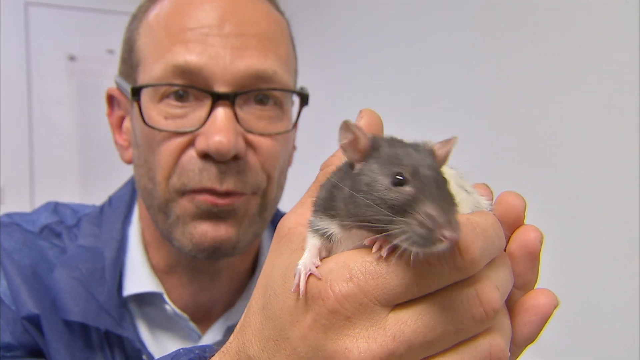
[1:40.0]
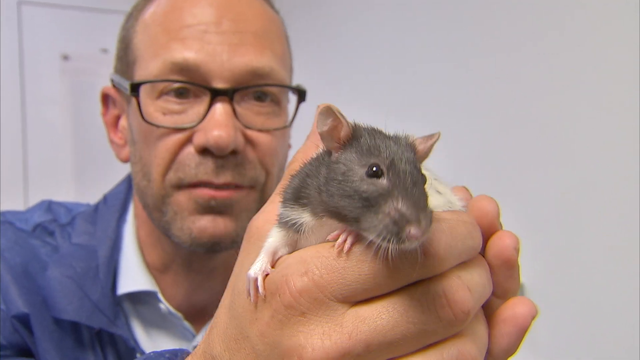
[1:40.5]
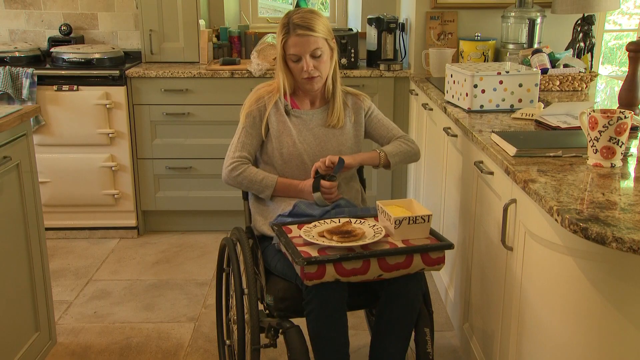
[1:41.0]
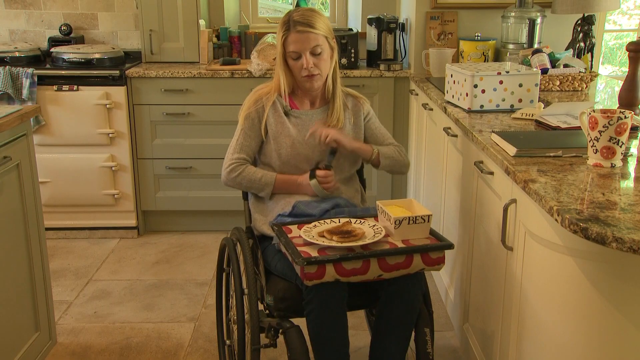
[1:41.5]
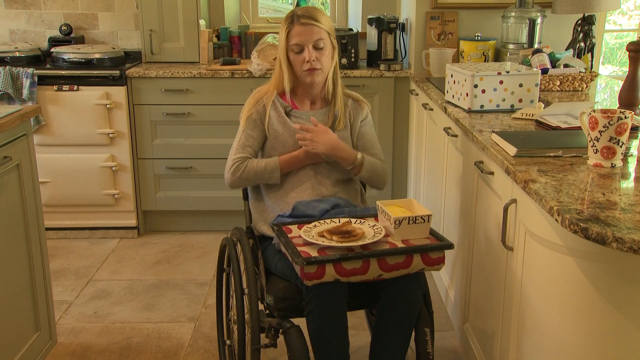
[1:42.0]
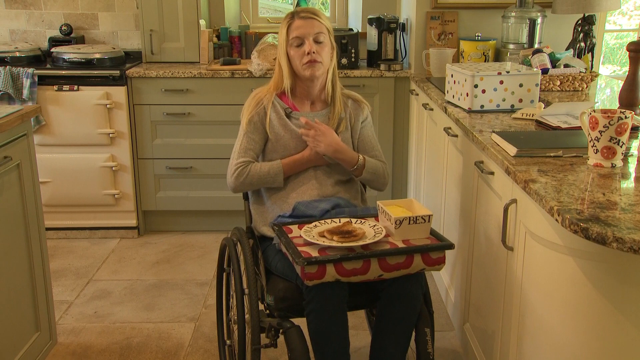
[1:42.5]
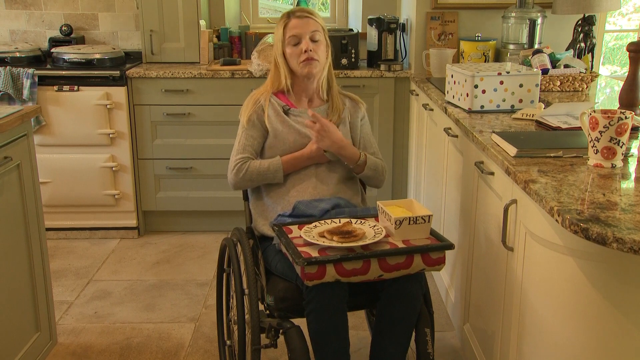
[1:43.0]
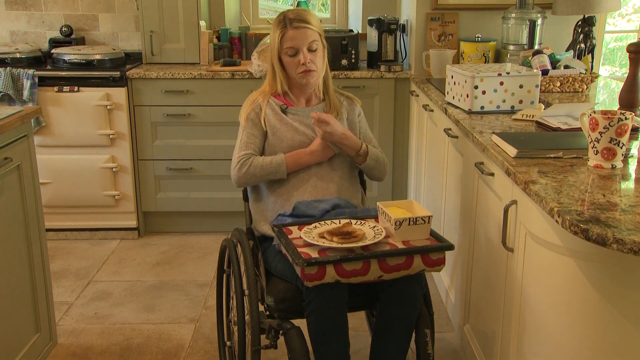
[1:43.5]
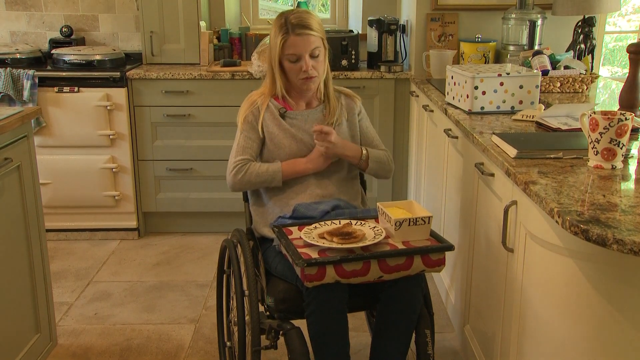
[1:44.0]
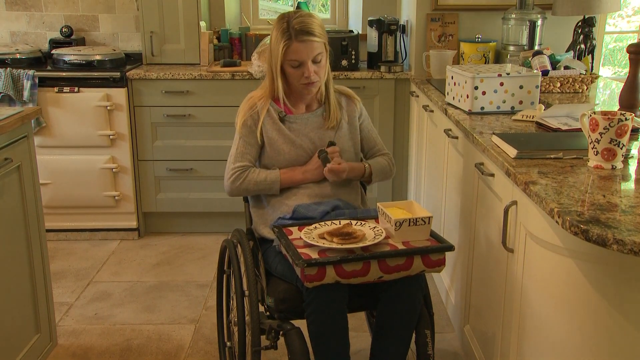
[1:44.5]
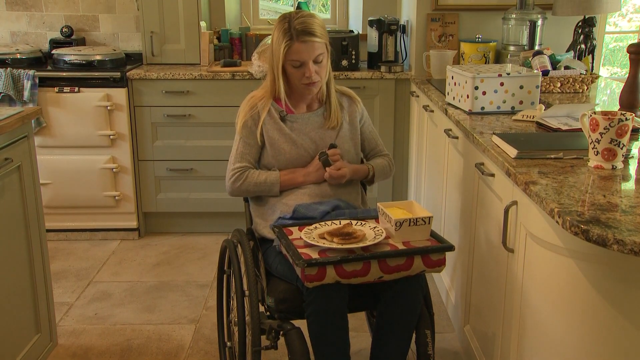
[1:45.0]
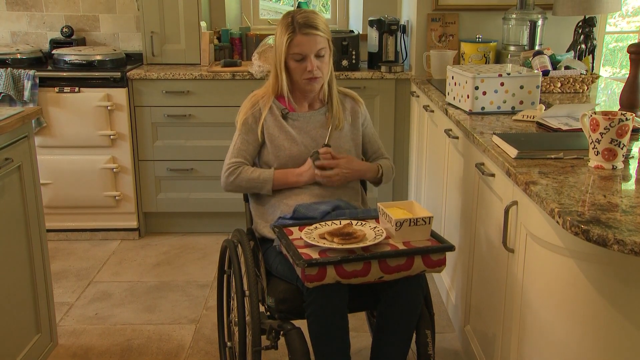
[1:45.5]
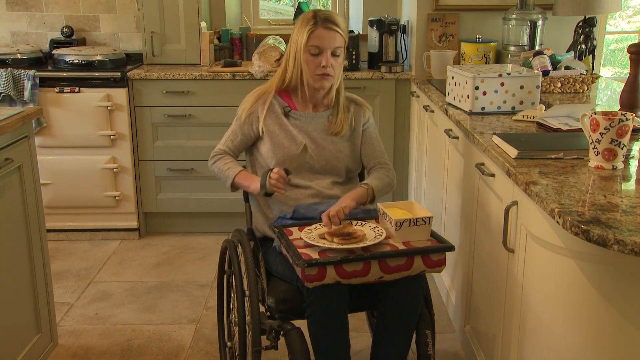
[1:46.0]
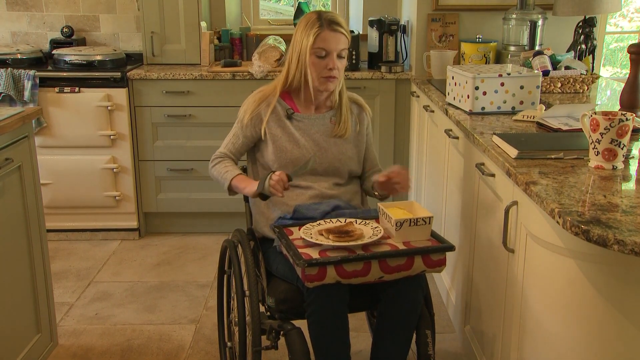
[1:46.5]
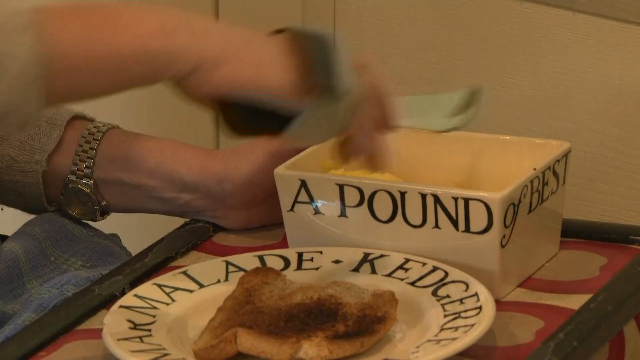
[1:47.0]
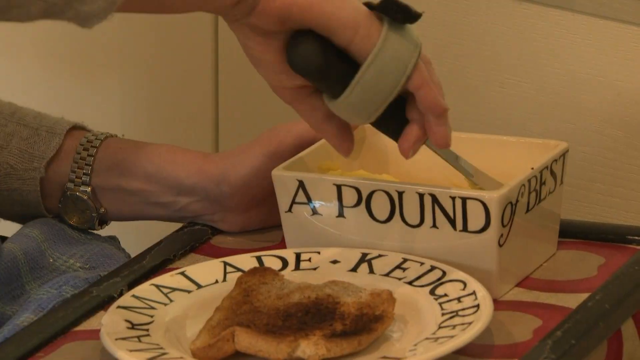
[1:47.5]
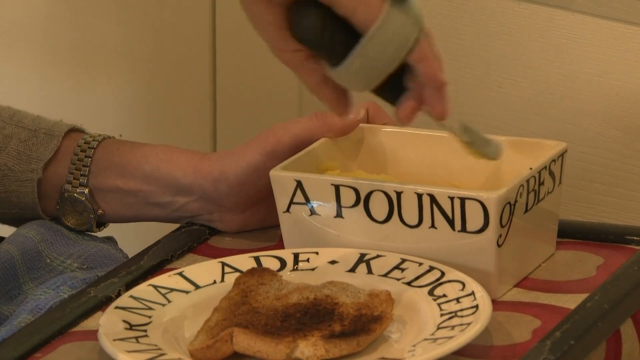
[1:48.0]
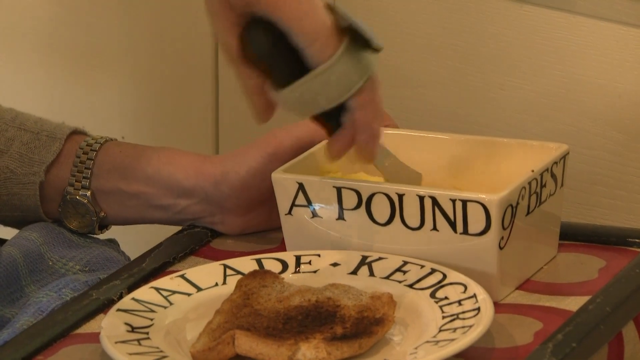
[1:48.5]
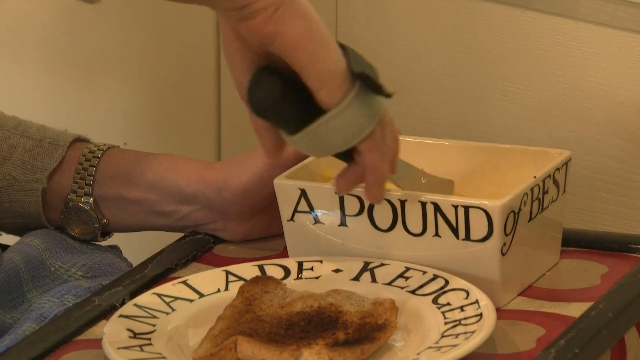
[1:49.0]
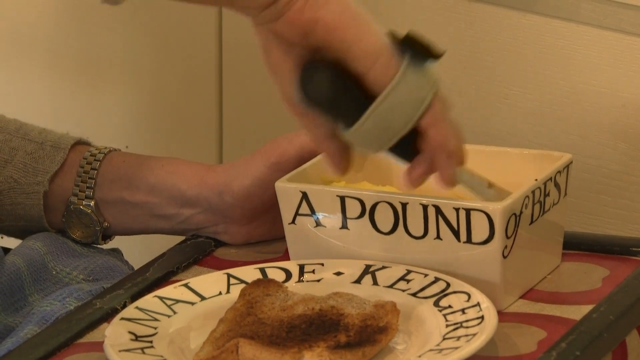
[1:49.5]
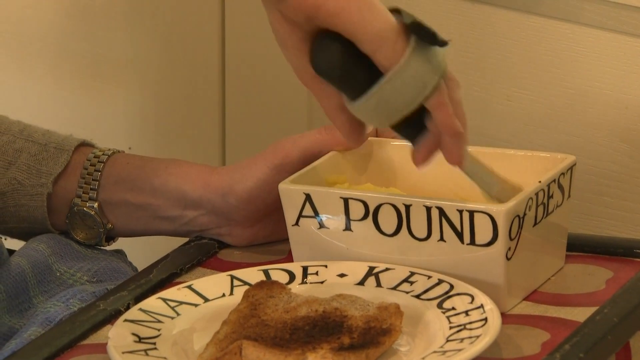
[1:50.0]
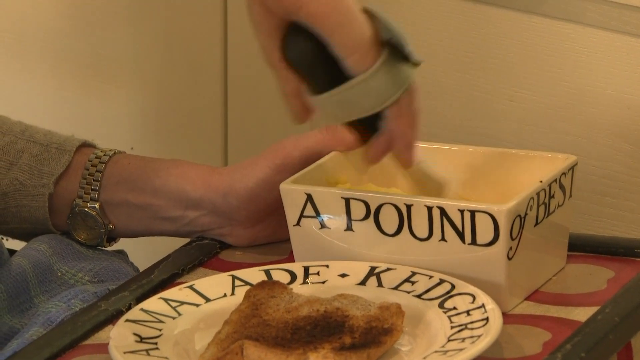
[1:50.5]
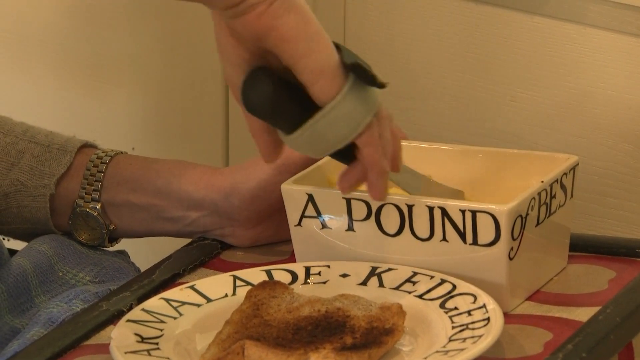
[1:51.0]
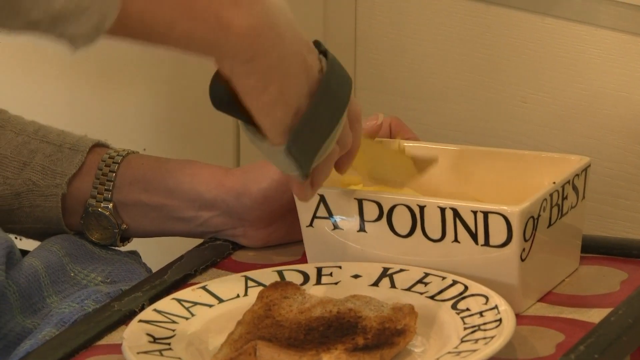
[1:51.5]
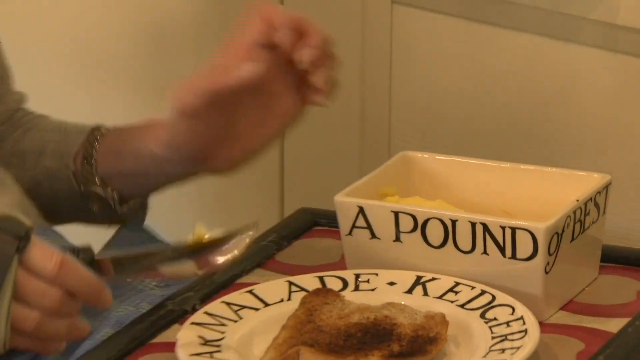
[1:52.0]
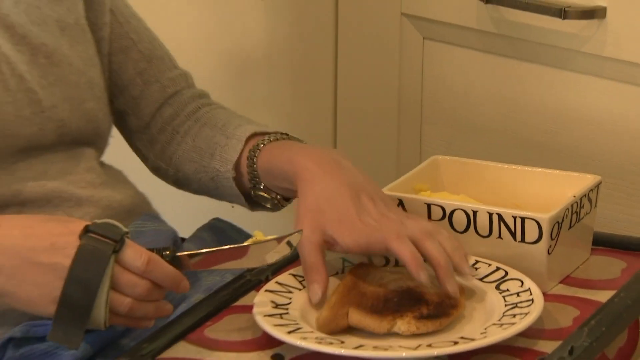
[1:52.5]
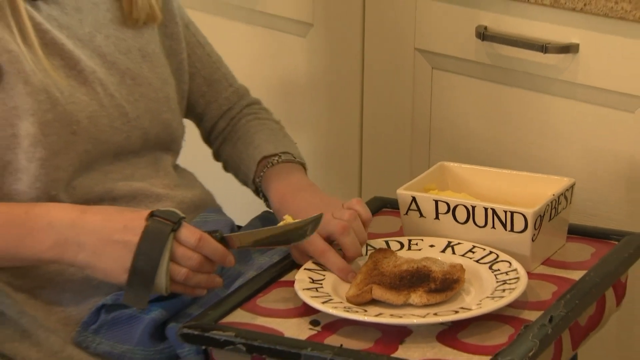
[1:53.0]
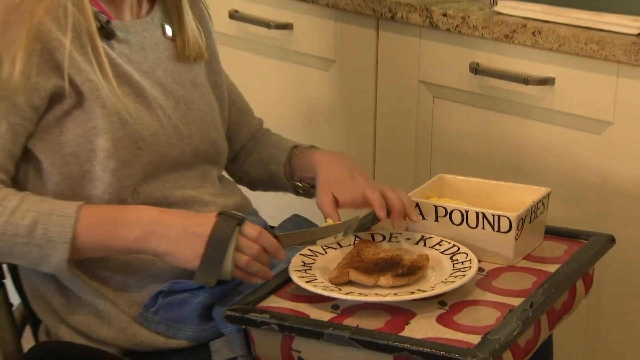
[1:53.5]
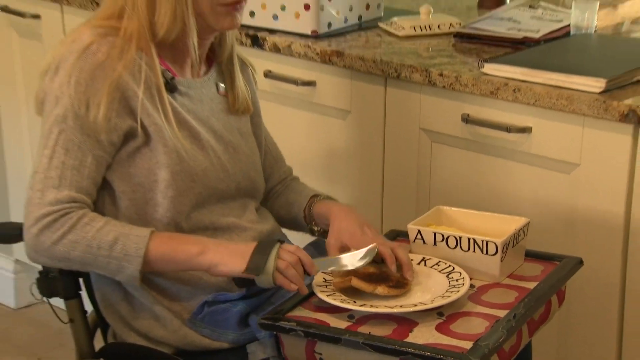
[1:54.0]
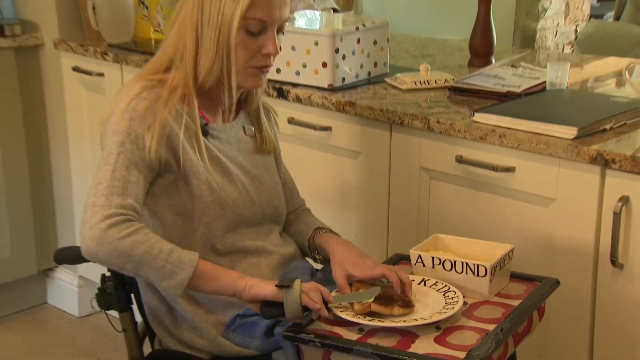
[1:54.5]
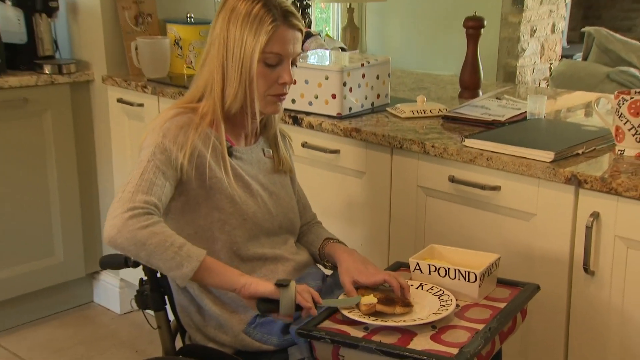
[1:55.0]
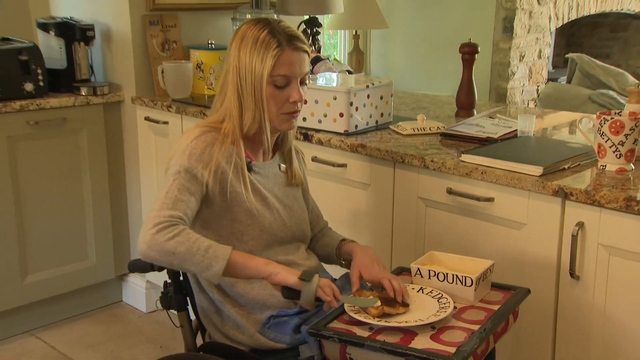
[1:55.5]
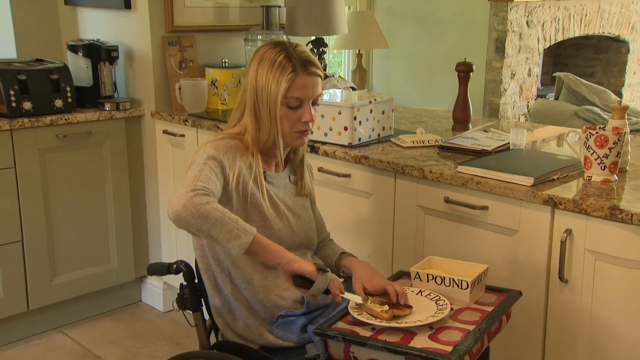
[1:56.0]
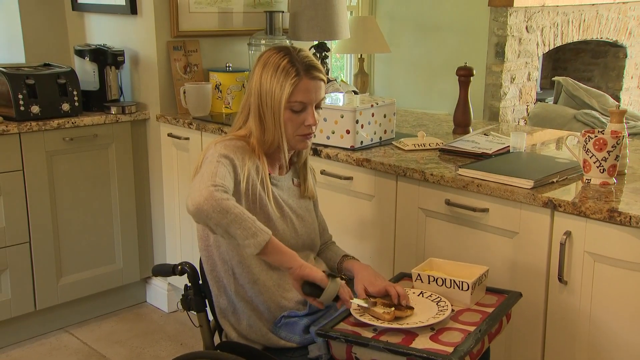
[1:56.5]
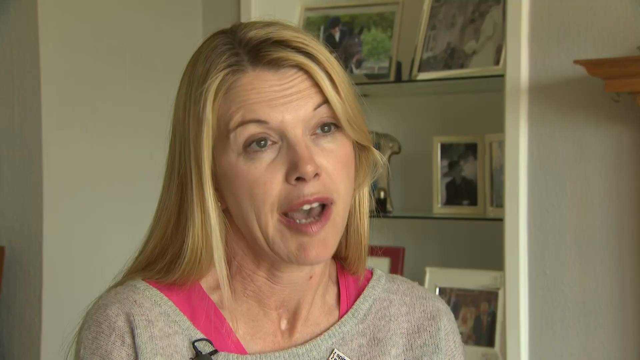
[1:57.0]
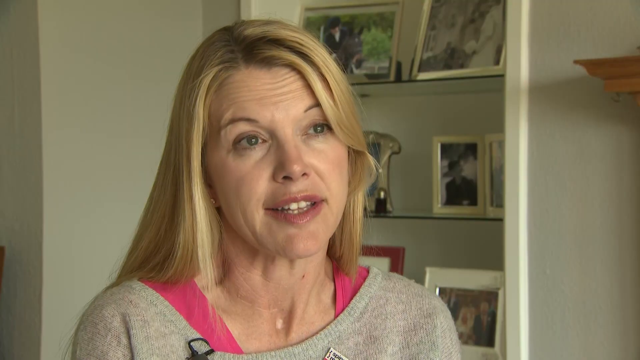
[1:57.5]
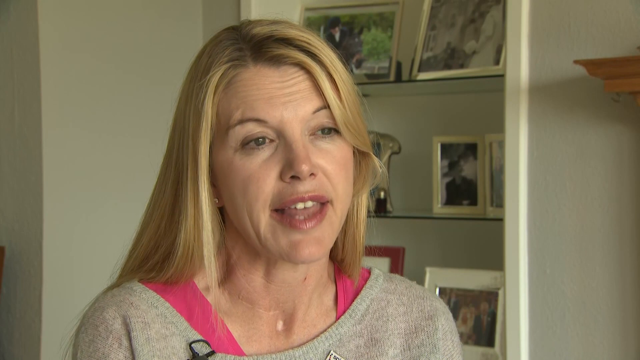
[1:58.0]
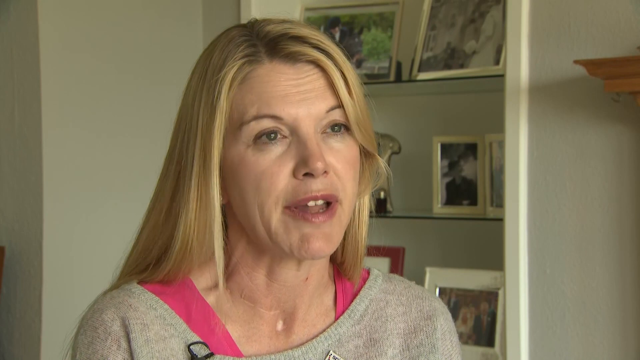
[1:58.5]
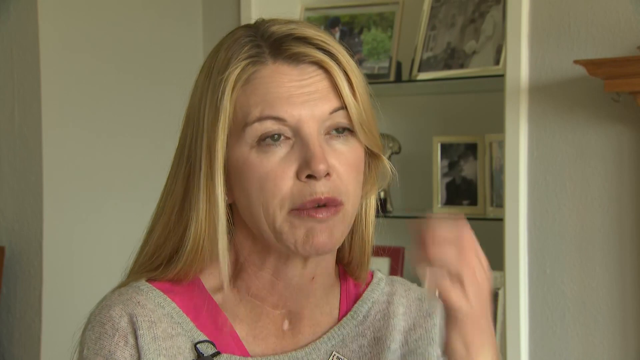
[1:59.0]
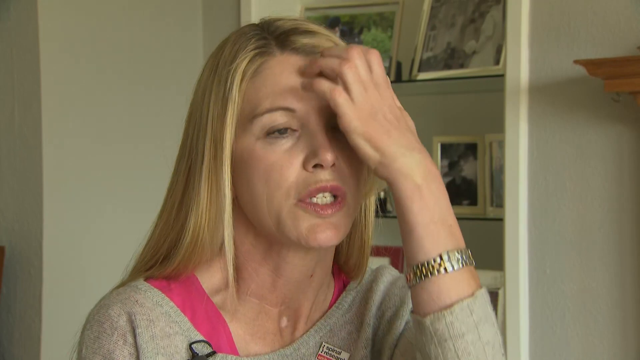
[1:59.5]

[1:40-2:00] The video cuts to a different setting that looks to be an ordinary house kitchen. The walls look white and grey, the countertops look like grey marble, and there are white cupboards and some grey cupboards. There are pots and pans on the side and on the right, along with various cake tins, cups, blenders and measuring instruments. In the middle of the screen, a blonde-haired woman sits in a wheelchair looking down at some sort of brace for her hand that supports her wrist. On her lap is a tray with toast on a plate, and to its right is what looks to be butter in a ceramic-looking dish that says "A Pound of Best". She spreads butter on the toast, and the video cuts to a close-up of her speaking directly to the camera.